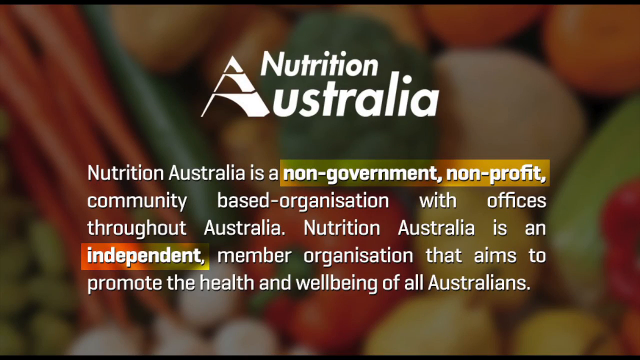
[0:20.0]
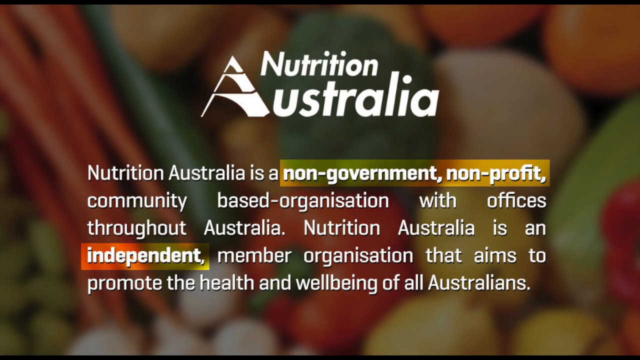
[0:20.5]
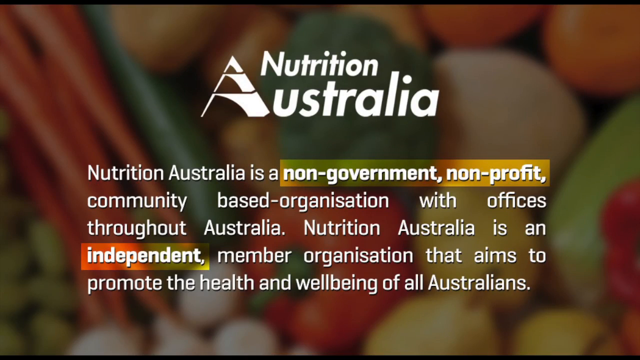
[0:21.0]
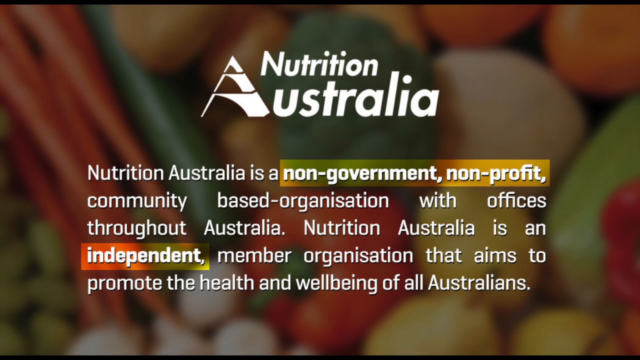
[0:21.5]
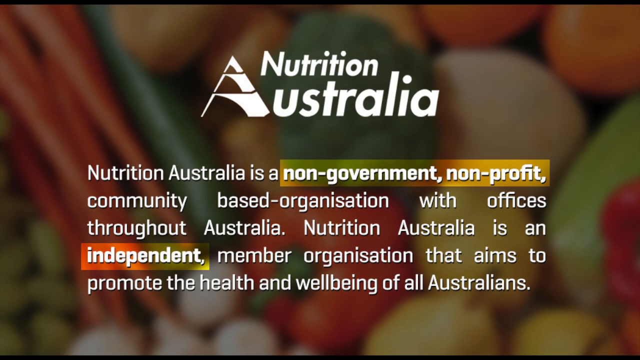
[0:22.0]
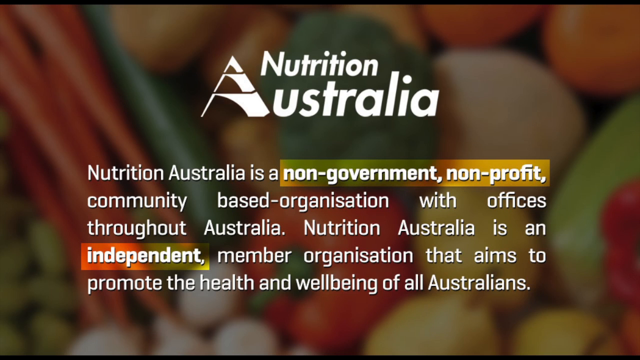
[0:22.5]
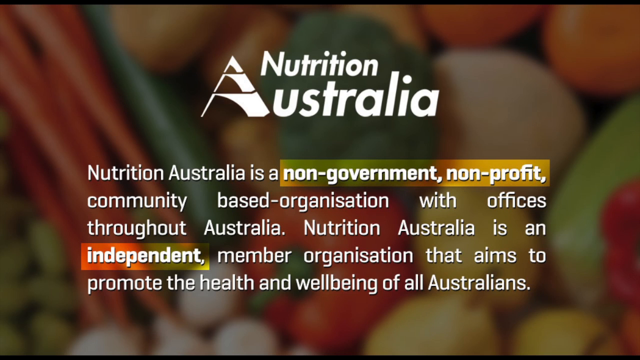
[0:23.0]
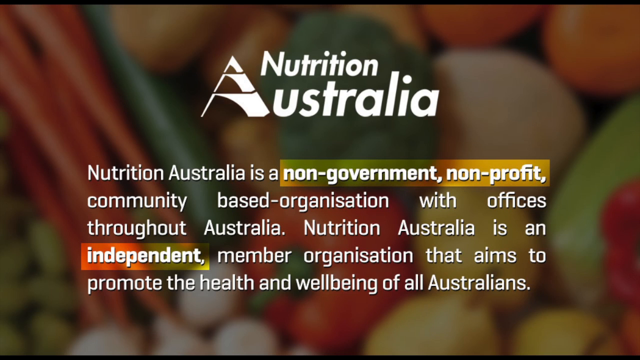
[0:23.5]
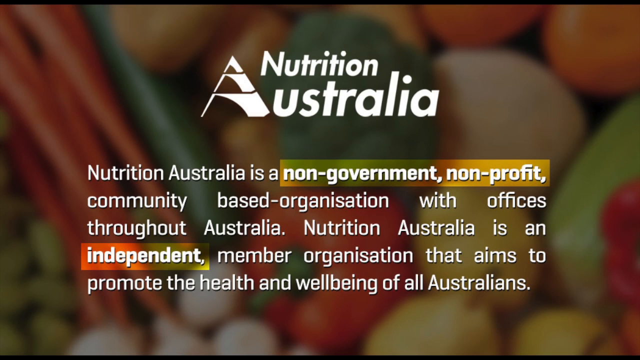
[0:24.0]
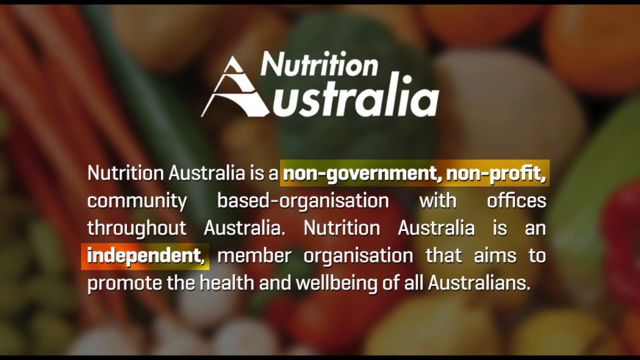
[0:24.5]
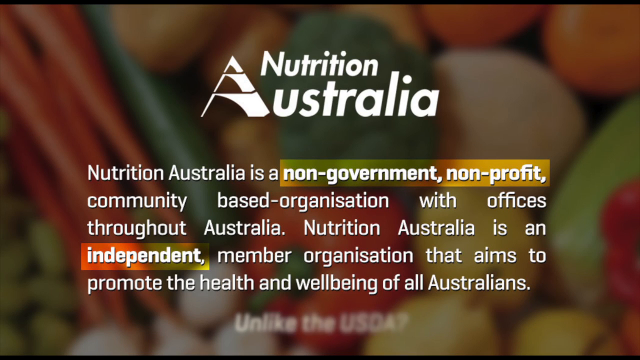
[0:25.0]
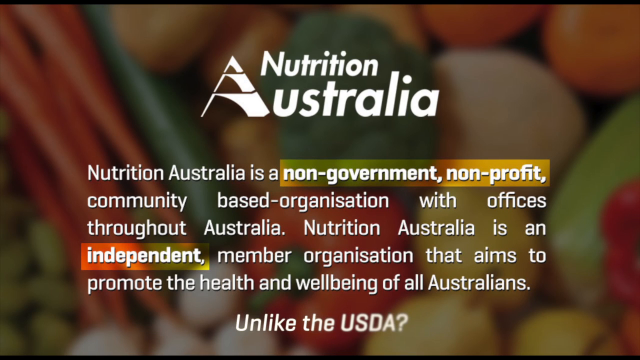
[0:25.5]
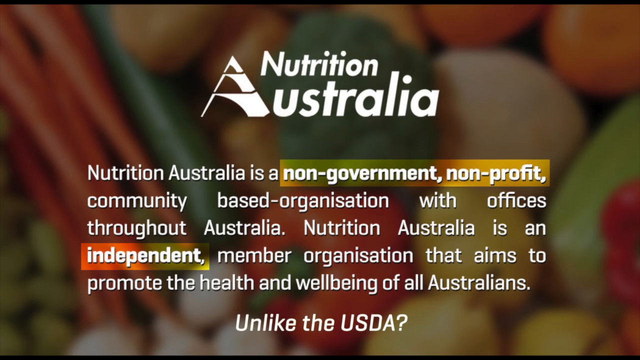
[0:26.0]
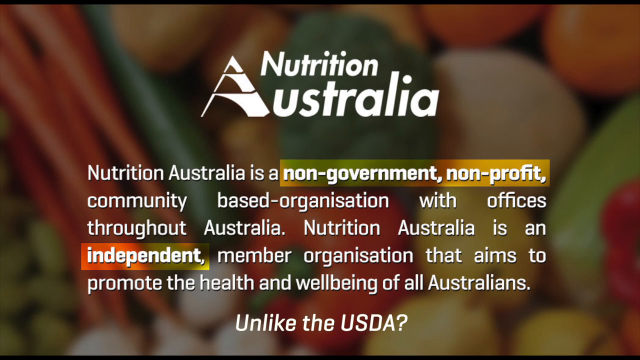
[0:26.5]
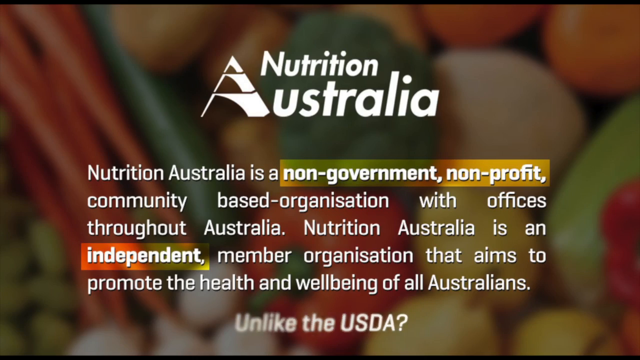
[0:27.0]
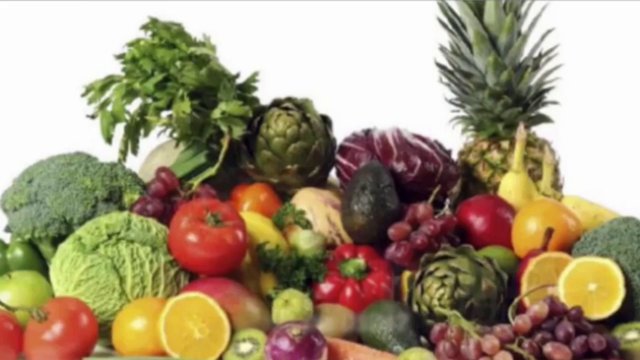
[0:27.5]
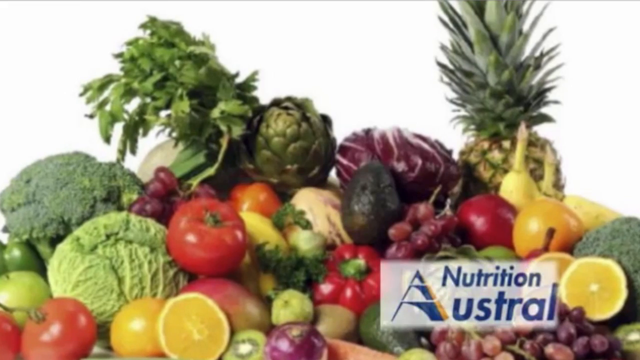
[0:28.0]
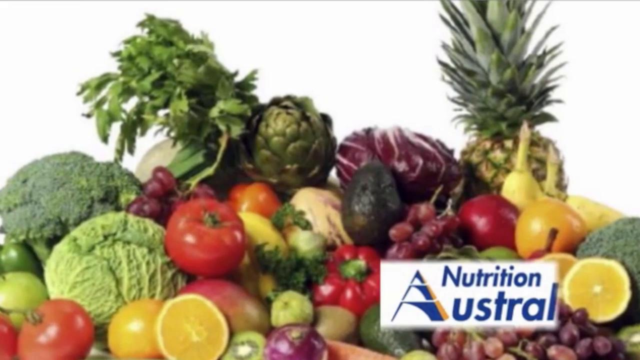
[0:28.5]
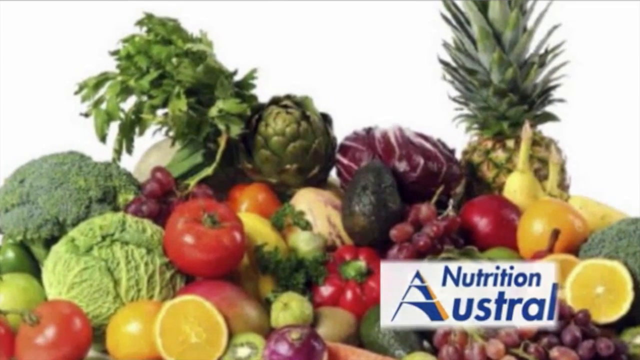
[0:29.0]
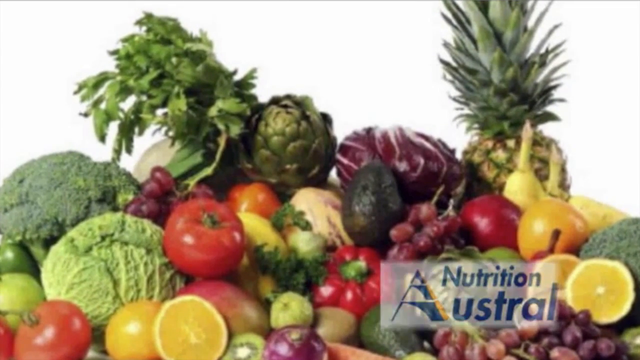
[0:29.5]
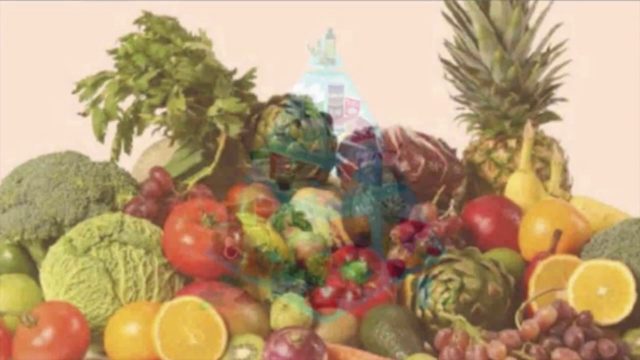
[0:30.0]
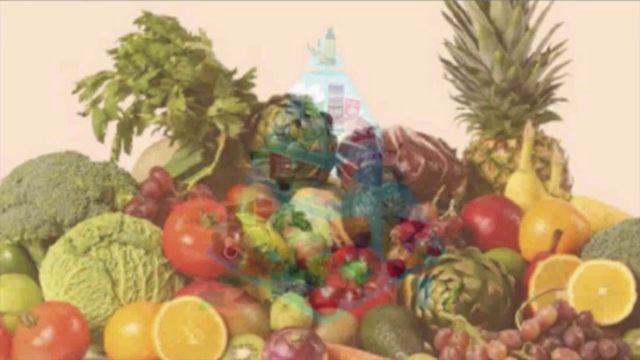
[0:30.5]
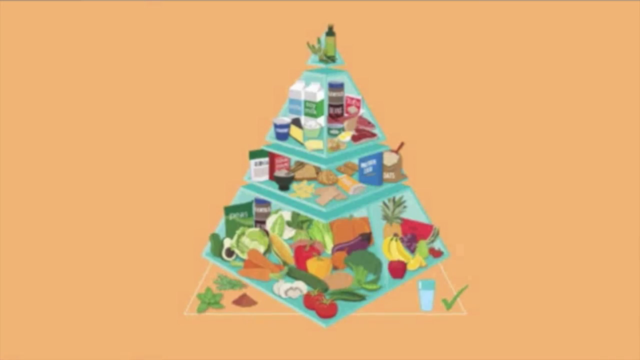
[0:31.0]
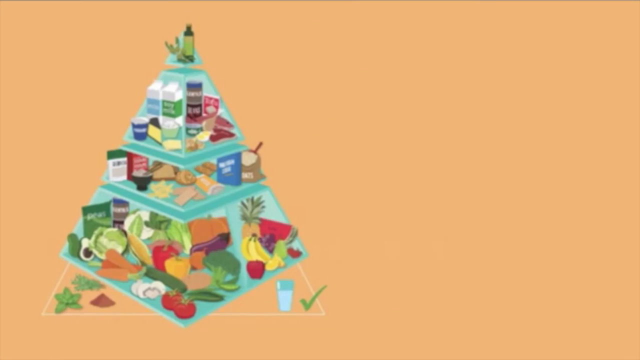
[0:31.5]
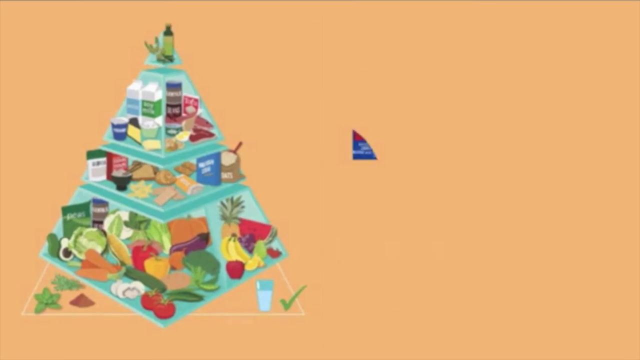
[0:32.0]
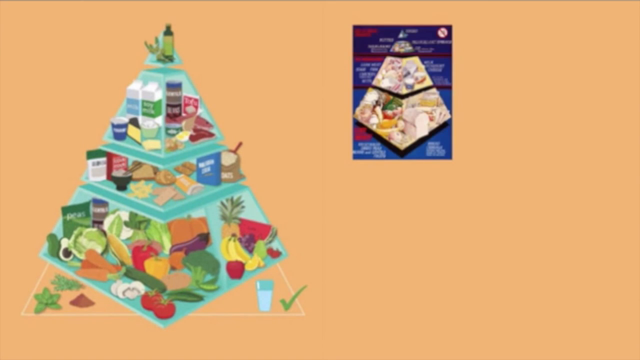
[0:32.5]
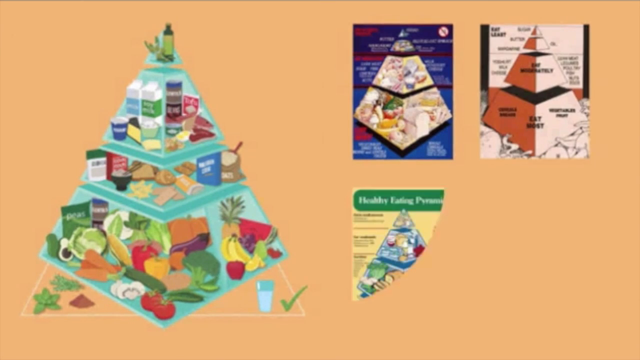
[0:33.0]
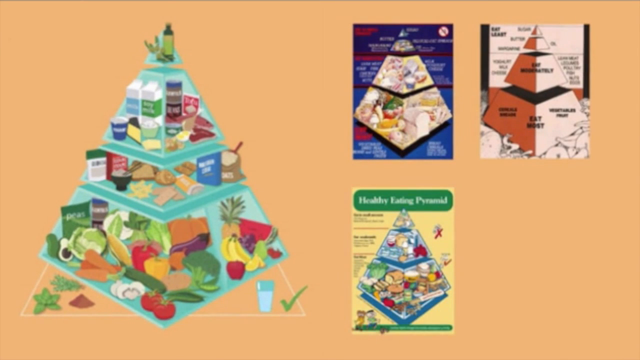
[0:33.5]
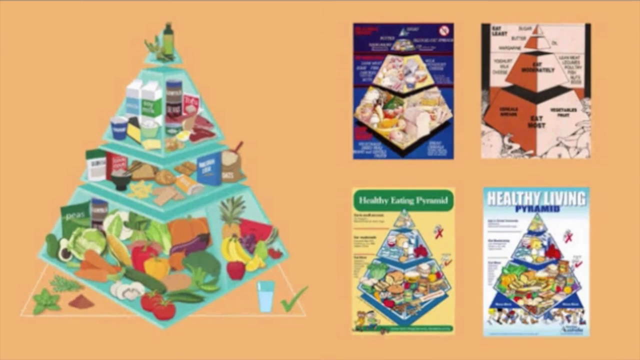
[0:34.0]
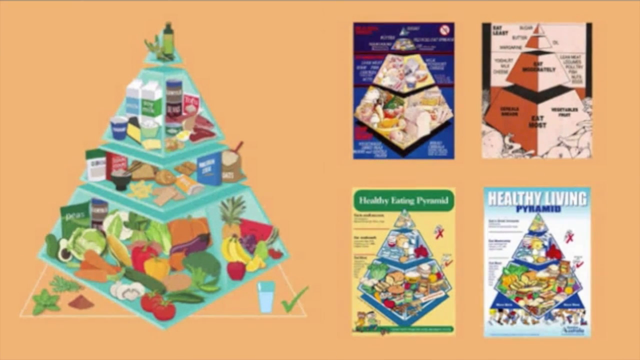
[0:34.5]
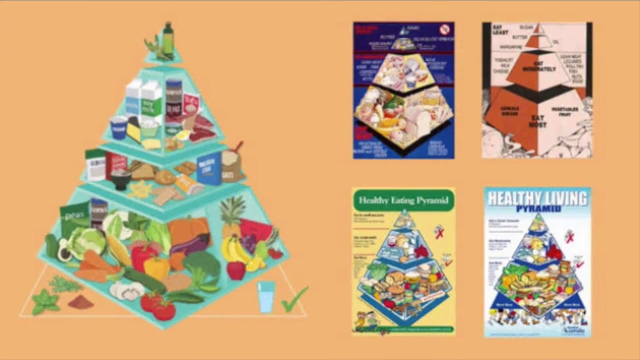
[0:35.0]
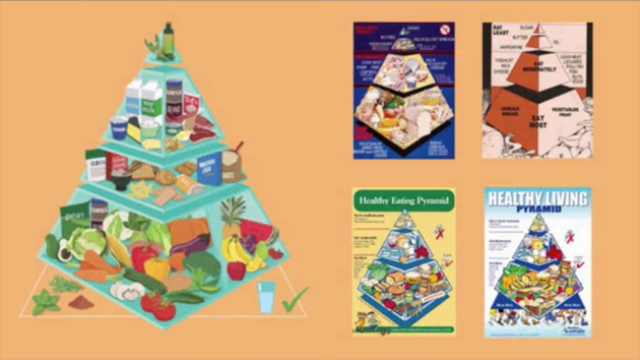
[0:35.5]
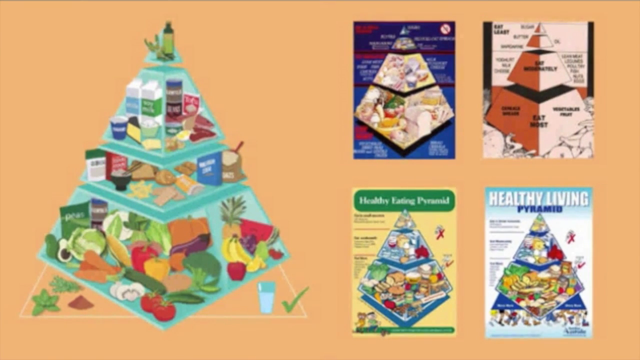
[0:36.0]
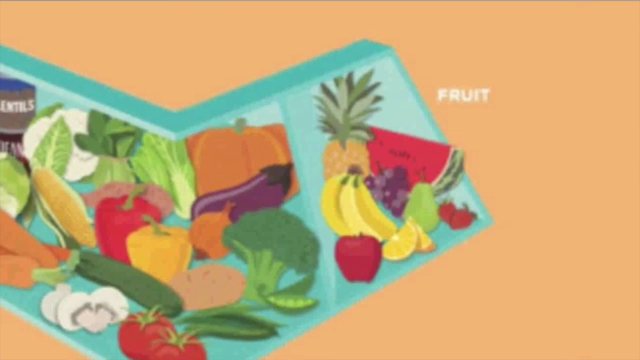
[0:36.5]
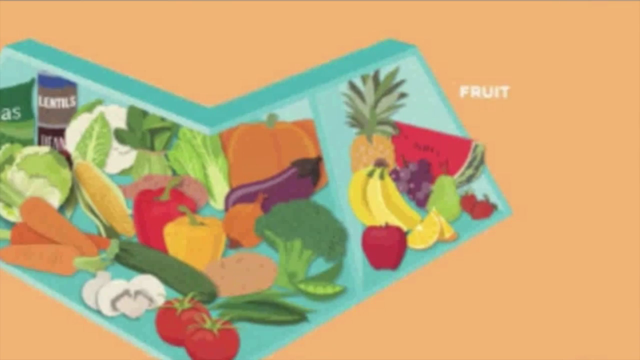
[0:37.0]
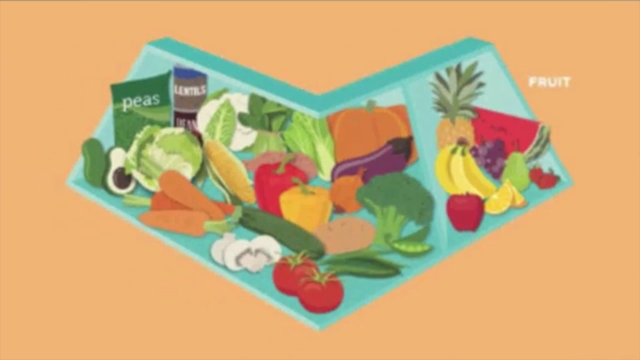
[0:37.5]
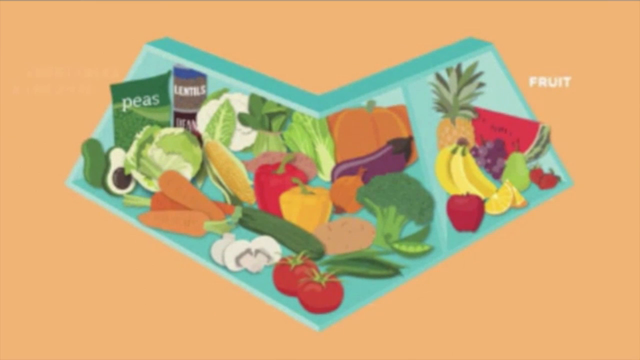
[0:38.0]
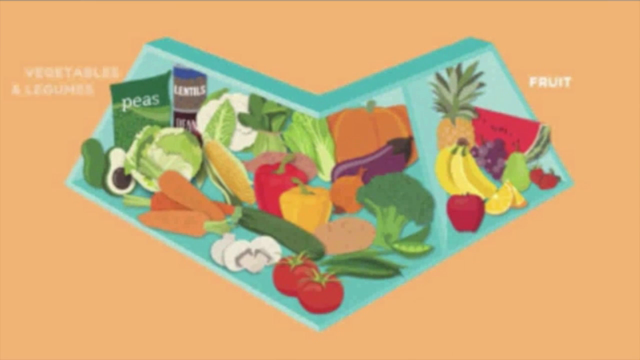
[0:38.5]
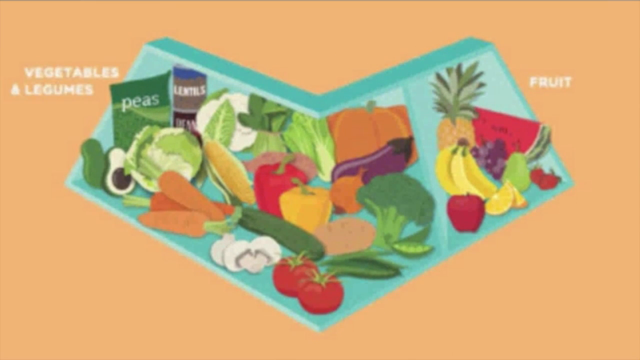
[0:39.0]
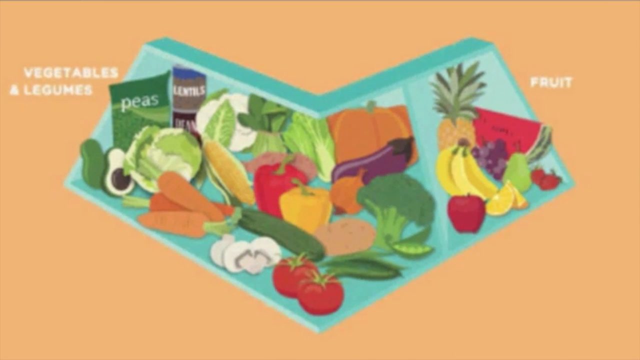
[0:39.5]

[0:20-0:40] The screen with a blurred vegetable background shows "Nutrition Australia" as the title, with the text underneath reading "Nutrition Australia is a non-government, non-profit, community-based organization with offices throughout Australia. Nutrition Australia is an independent member organization that aims to promote the health and well-being of all Australians." The words "non-government, non-profit" and the word "independent" are highlighted in yellow. This stays up for about six seconds, and then white words come up at the bottom reading "unlike the USDA?" Next is a pile of fruits and vegetables: a pineapple on the right, artichoke, oranges including a whole orange and an orange cut in half, grapes, avocado, red cabbage, peppers, tomatoes, broccoli, green cabbage, apples and probably more. A Nutrition Australia emblem comes up in the bottom right and then fades out. An illustration of a food pyramid follows, made as a 3D pyramid that kind of looks like it has shelves. The bottom shelf has carrots, zucchini, tomatoes, bananas, watermelon, pineapple, pear, broccoli, pumpkin, eggplant, corn, lettuce and avocado; the second tier has grains; the third tier has meat and dairy items; and the top point of the pyramid has oils. To the right of the pyramid is a cup of milk with a green check mark, and to the left are three piles of what looks like seasoning. Four more pyramids, each a quarter of the size of the first, pop up to the right of it. The view then zooms in on the first tier of the food pyramid, showing vegetables and legumes and fruit.